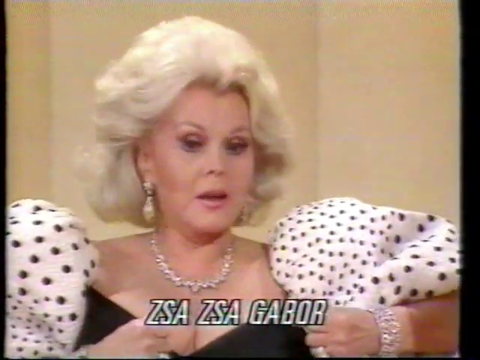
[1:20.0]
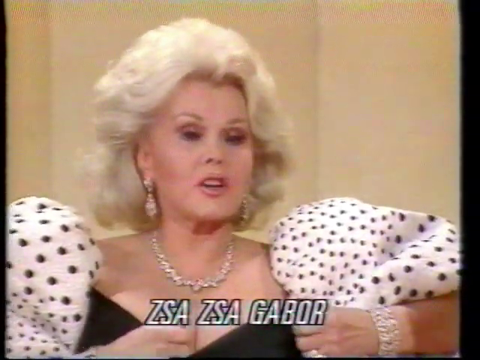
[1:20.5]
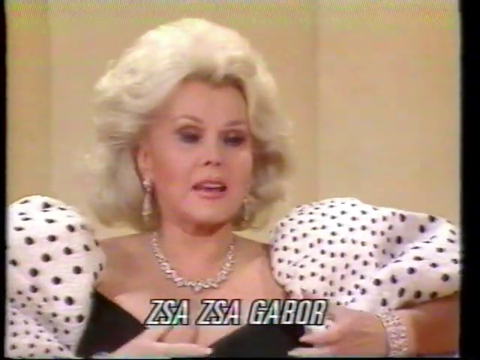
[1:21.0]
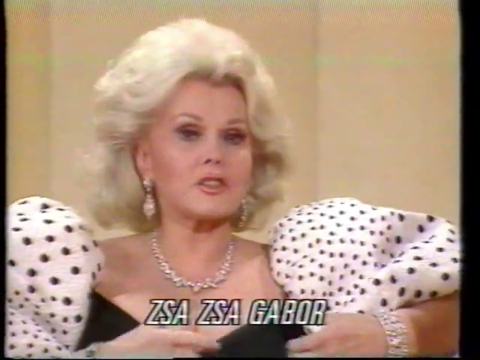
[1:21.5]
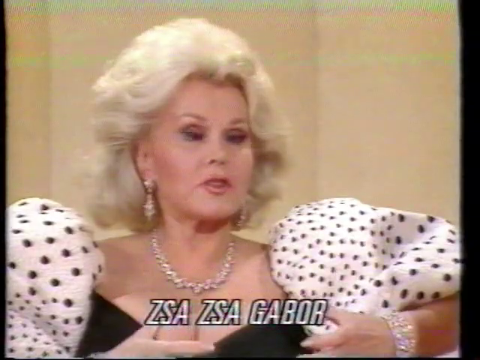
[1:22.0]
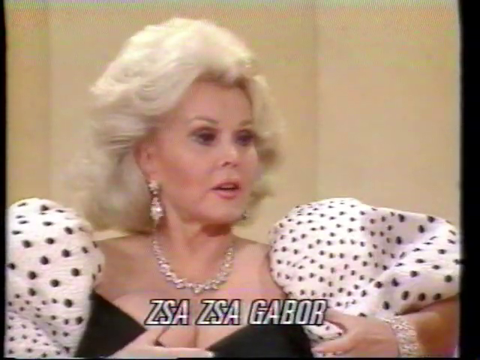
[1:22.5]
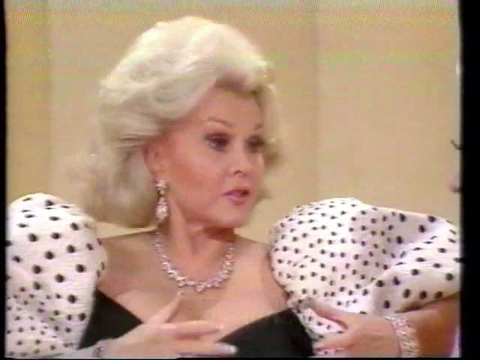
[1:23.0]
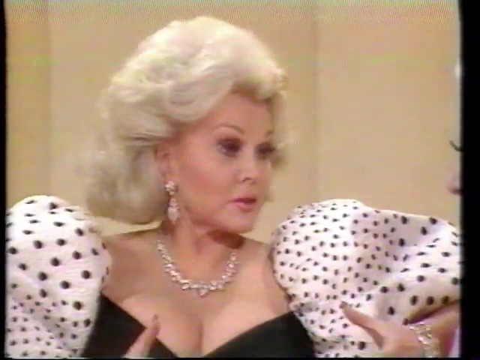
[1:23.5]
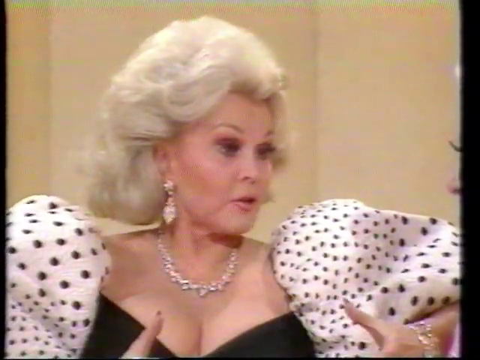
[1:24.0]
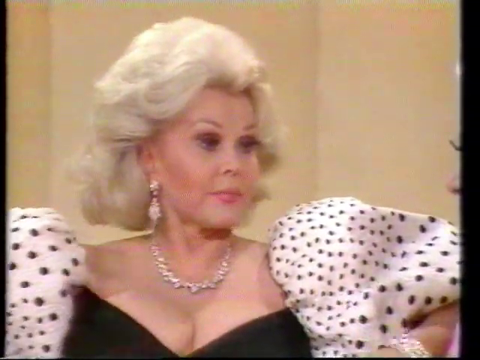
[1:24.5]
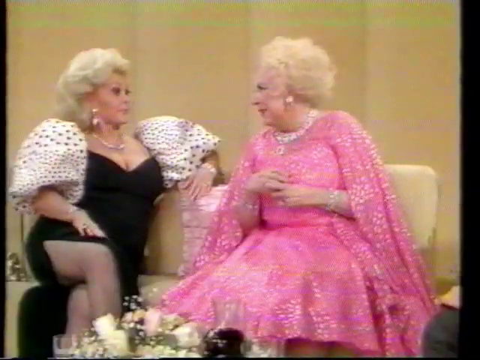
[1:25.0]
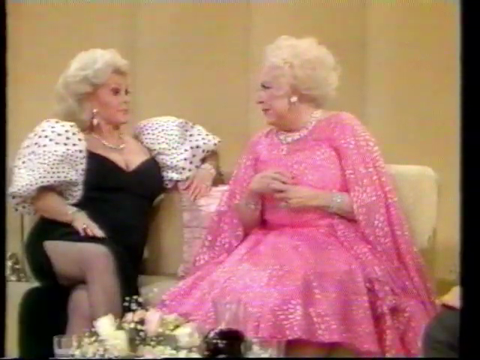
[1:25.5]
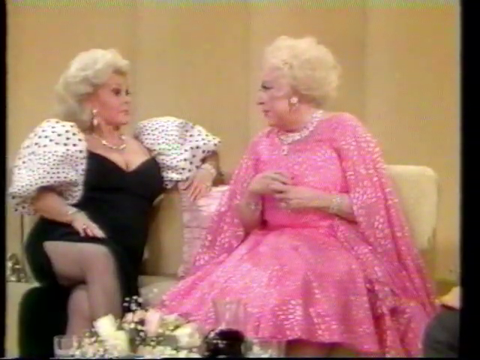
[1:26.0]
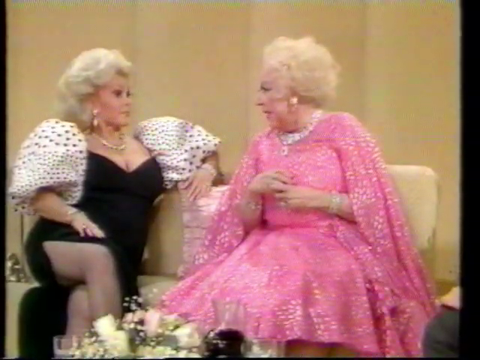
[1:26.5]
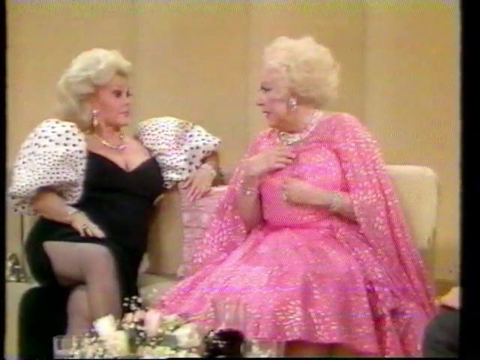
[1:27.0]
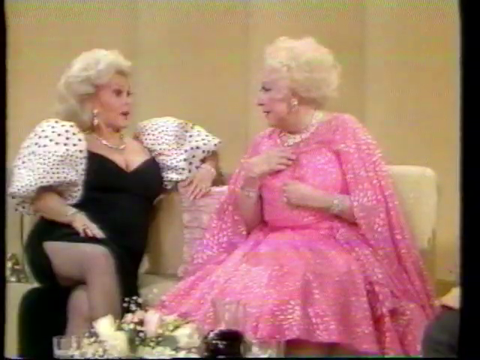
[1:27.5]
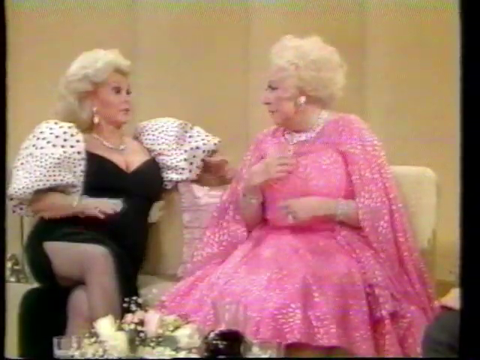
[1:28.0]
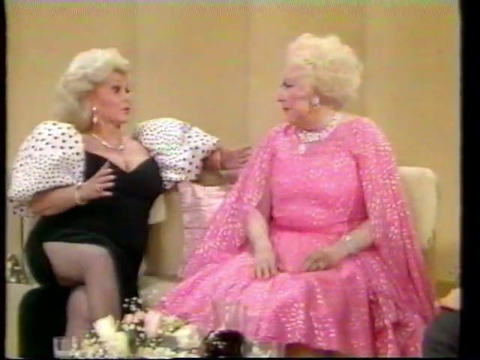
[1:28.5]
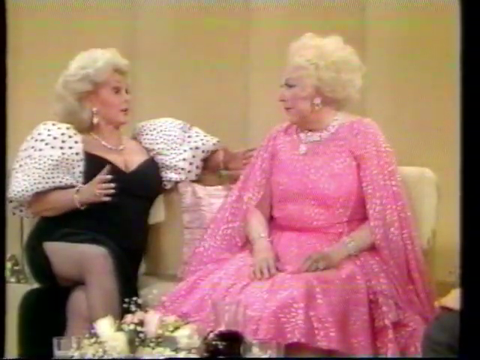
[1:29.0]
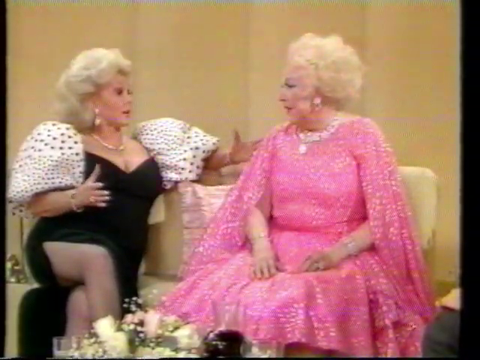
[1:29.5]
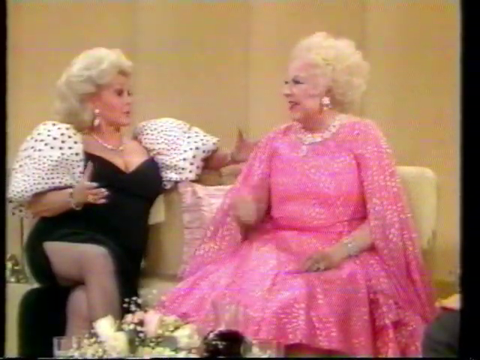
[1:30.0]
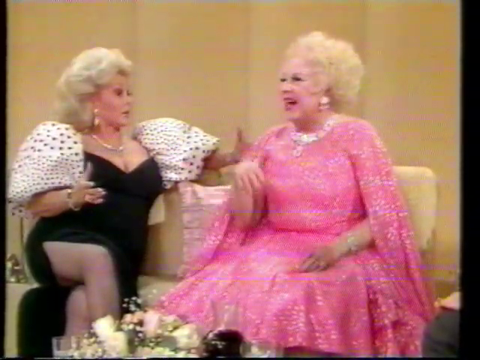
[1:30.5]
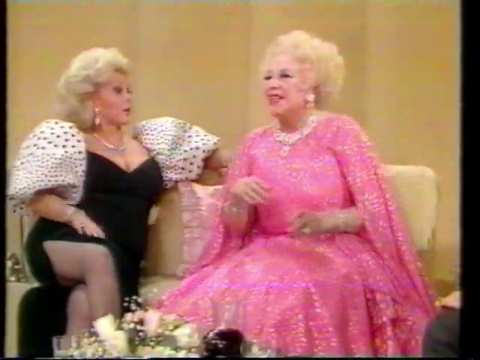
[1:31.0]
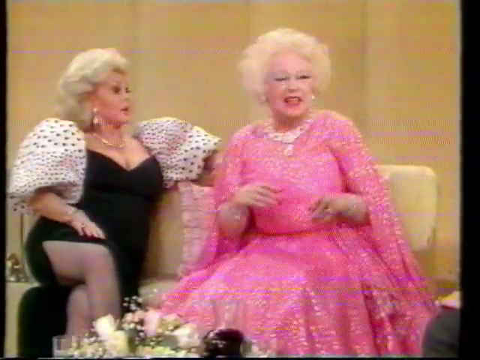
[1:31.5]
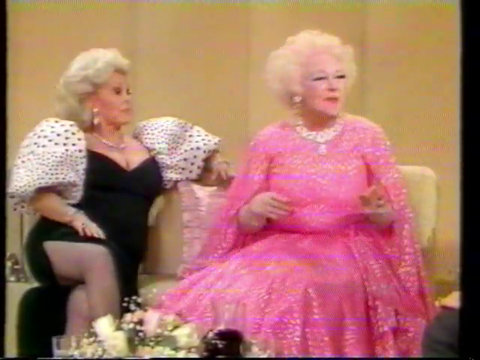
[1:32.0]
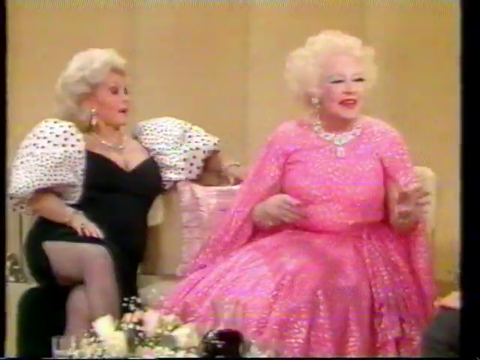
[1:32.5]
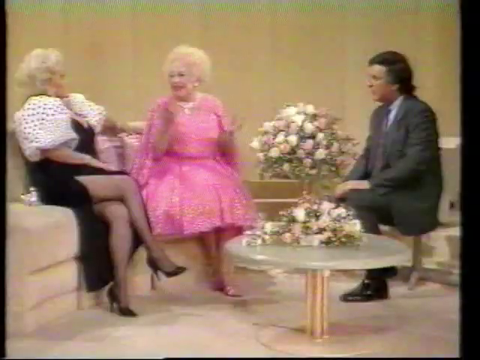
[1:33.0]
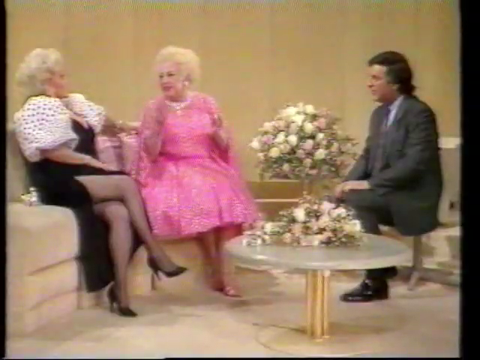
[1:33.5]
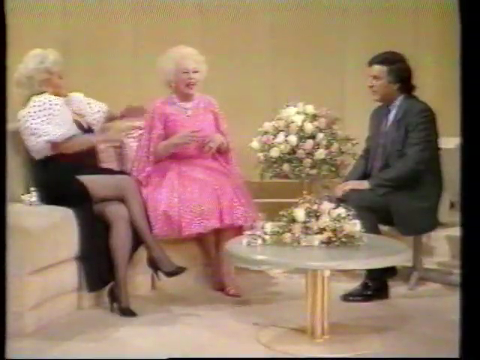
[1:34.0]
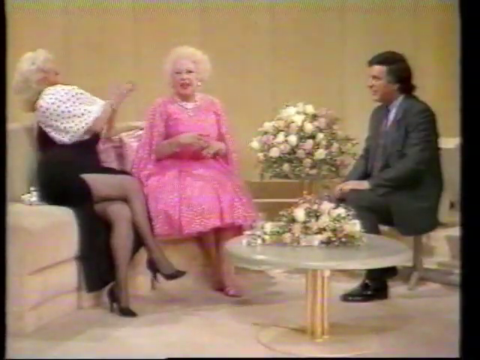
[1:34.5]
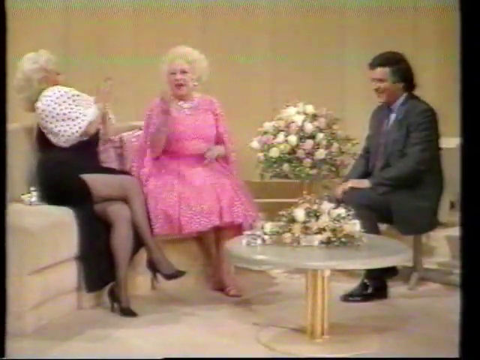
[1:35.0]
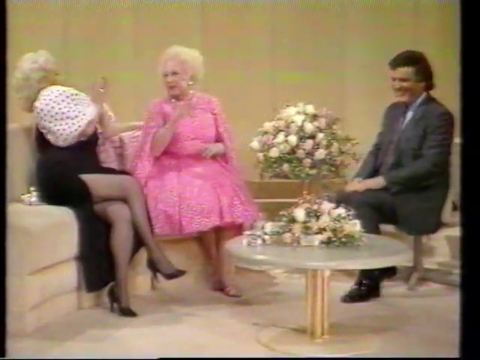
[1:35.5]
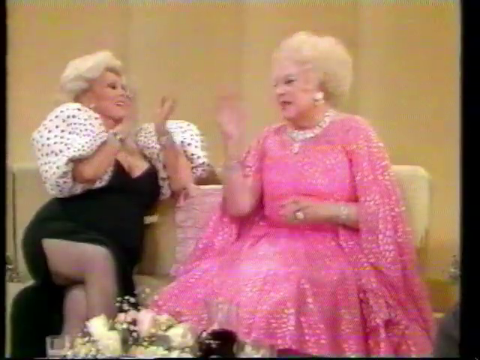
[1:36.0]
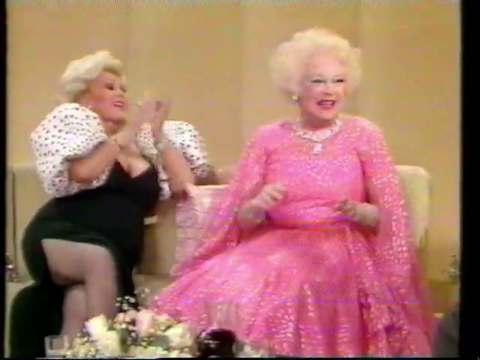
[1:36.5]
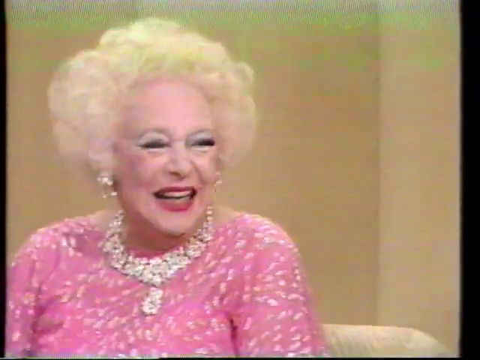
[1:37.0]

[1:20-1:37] The woman on the left, in polka dots and a black dress with diamond jewellery, is shown with the text "Zaza Gabor" at the bottom of the screen. She speaks intently, gesturing with her hands, while the woman in pink on her right looks and leans towards the left side of the screen, listening intently. Her hands are clasped together, pinky to index finger, with the right hand on top. The women keep speaking and nodding at each other, seemingly having a conversation, with very vivid hand gestures, waving their hands around. The camera zooms out to show all three people in the scene, surrounded by light-coloured couches and light-coloured flowers decorating the space. The woman on the left begins to clap as the woman in pink laughs. The camera zooms in on her and the video ends.